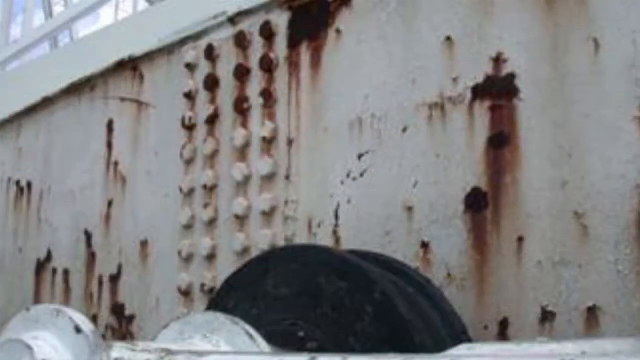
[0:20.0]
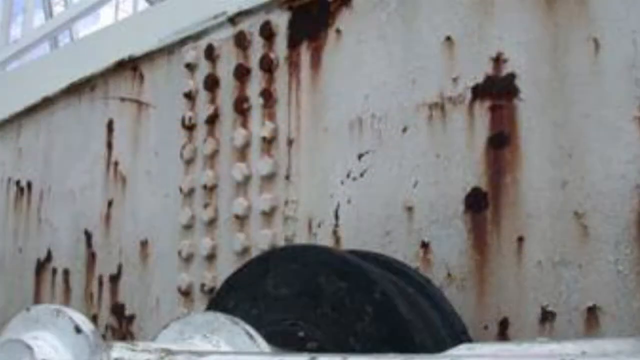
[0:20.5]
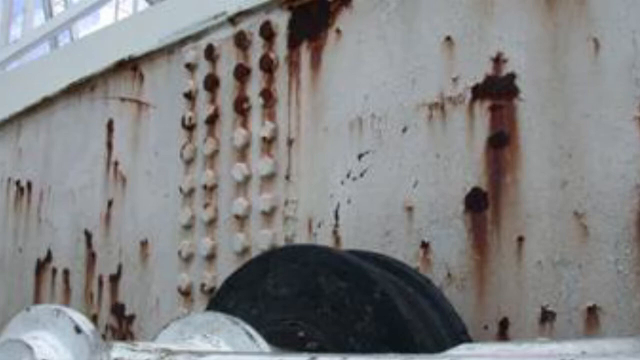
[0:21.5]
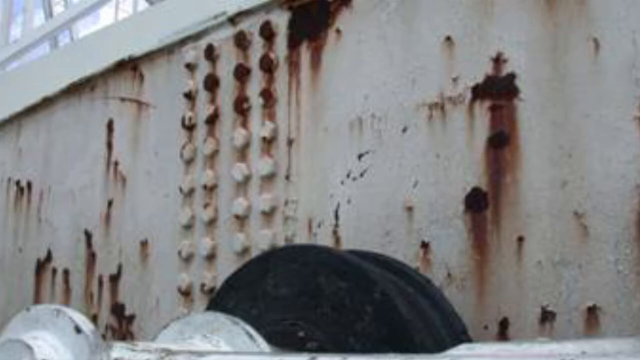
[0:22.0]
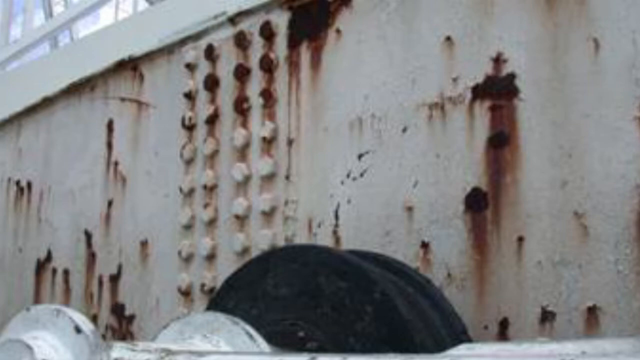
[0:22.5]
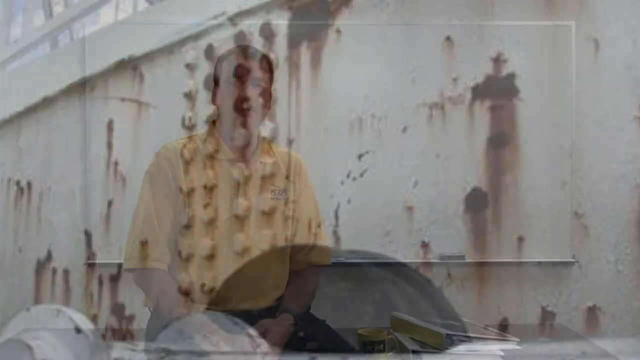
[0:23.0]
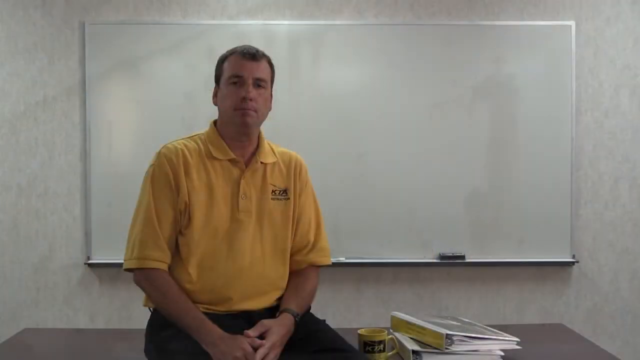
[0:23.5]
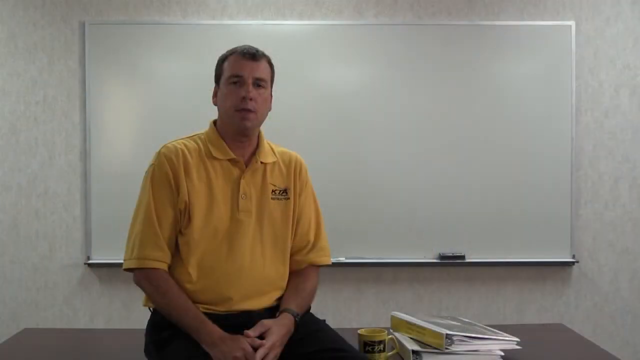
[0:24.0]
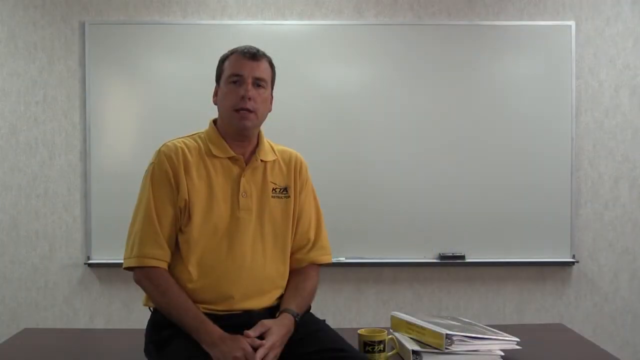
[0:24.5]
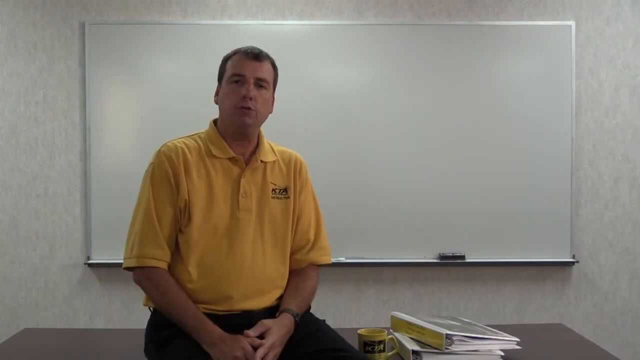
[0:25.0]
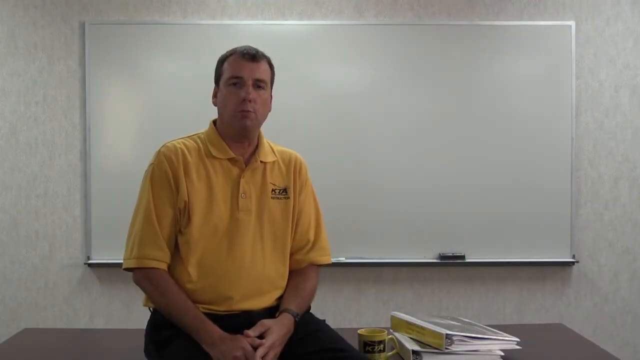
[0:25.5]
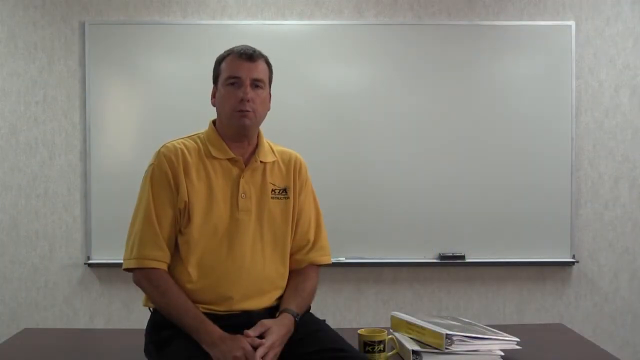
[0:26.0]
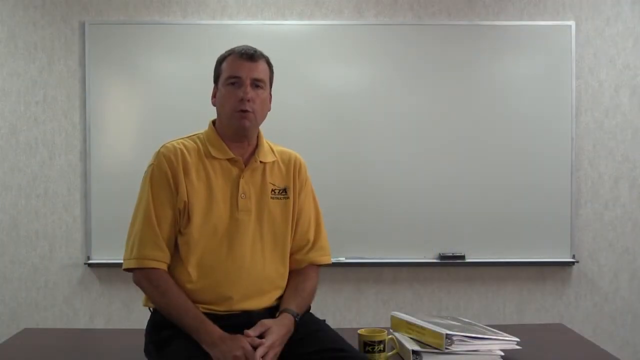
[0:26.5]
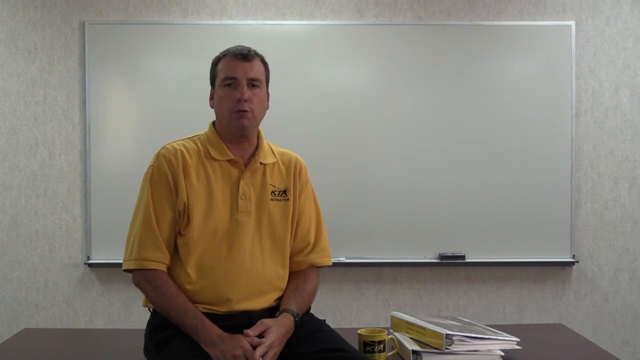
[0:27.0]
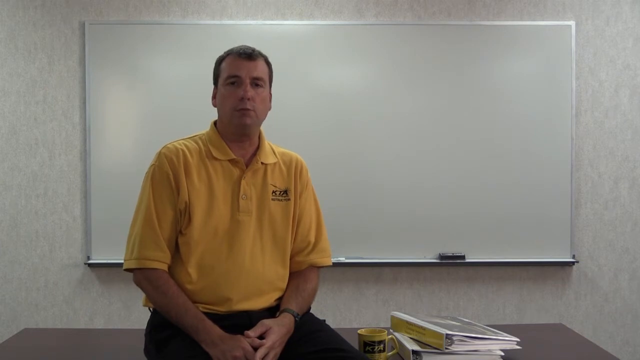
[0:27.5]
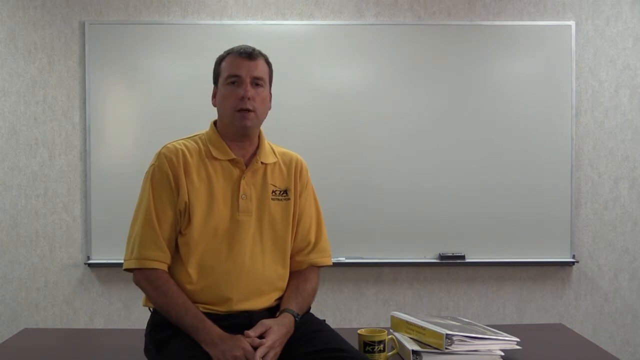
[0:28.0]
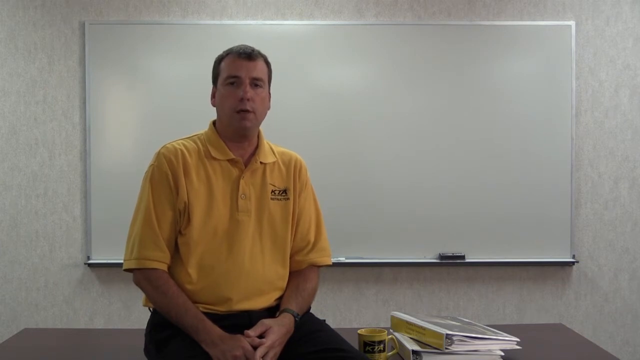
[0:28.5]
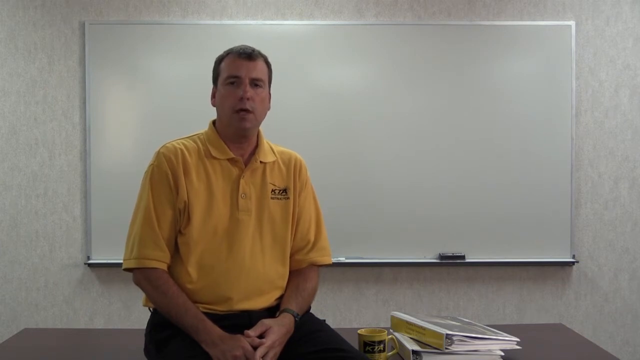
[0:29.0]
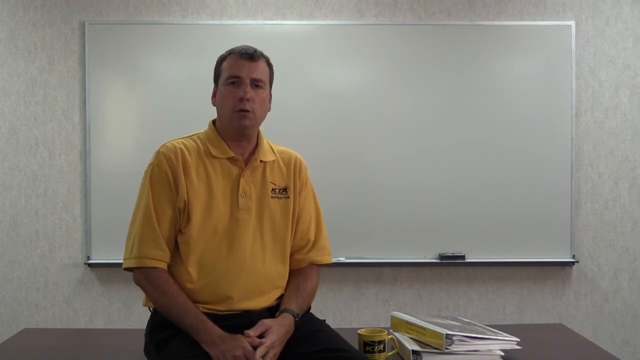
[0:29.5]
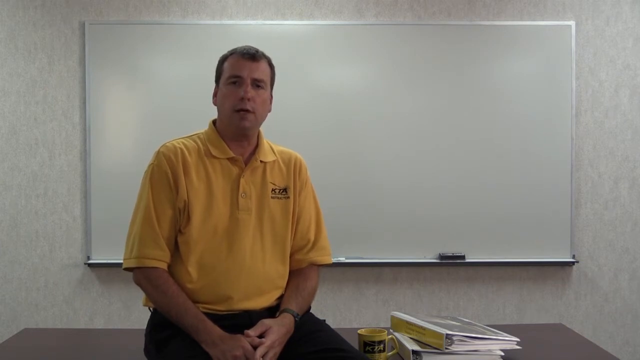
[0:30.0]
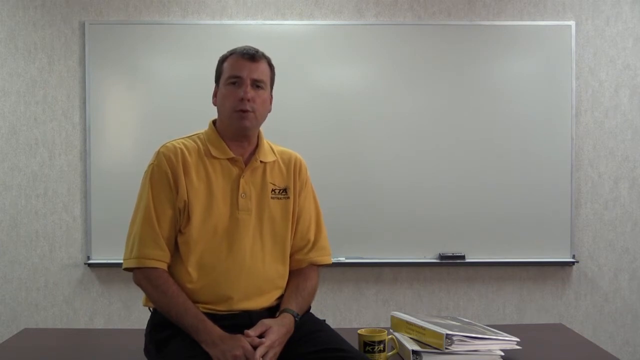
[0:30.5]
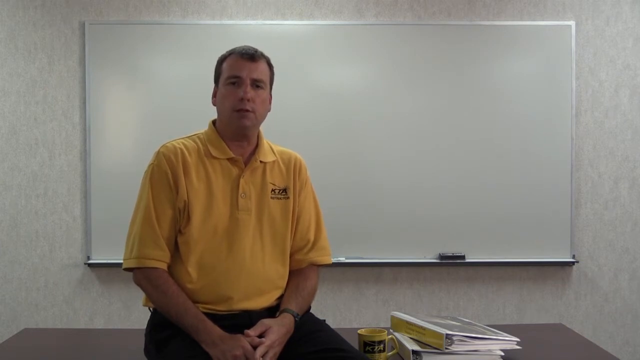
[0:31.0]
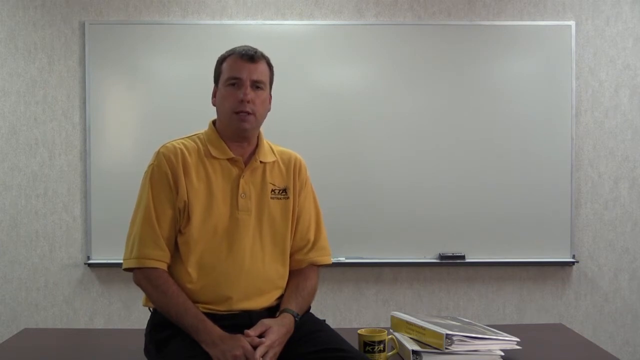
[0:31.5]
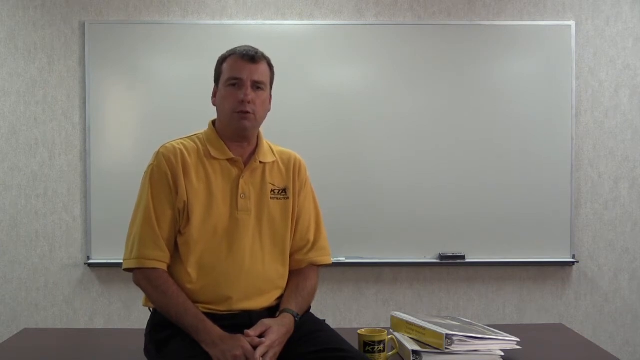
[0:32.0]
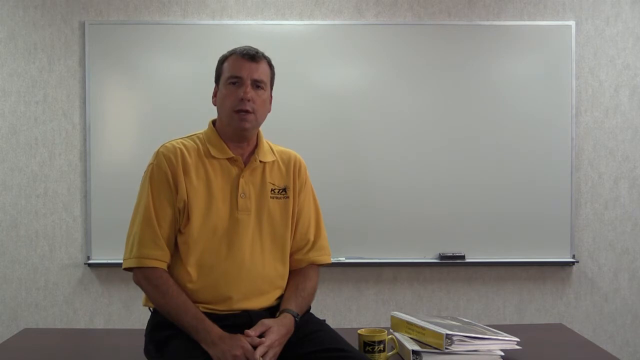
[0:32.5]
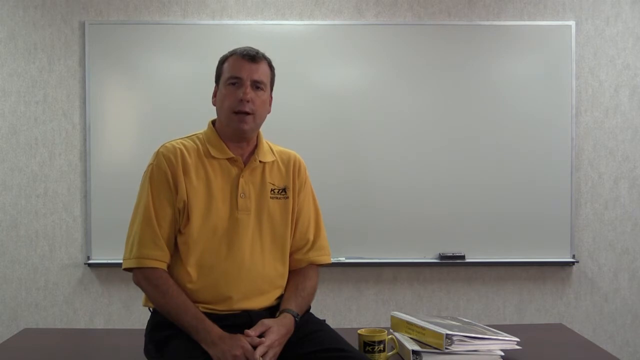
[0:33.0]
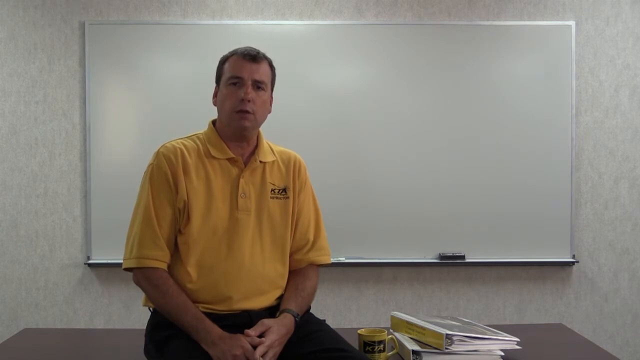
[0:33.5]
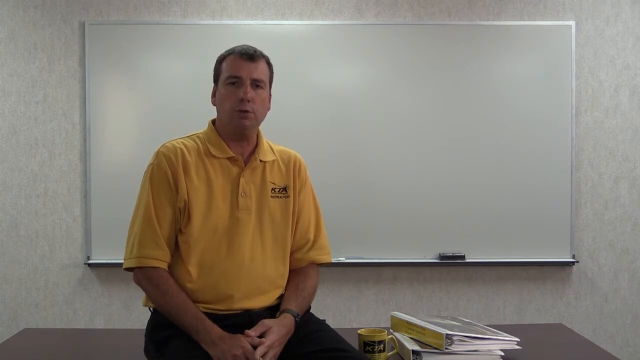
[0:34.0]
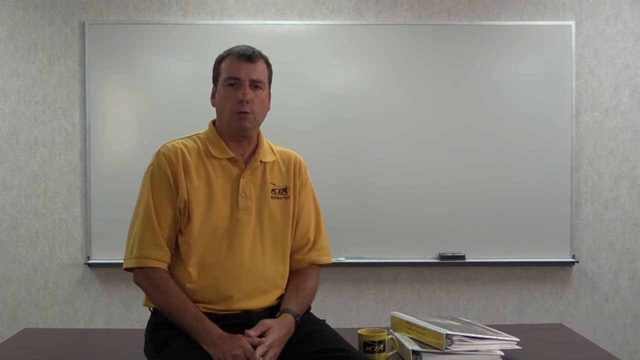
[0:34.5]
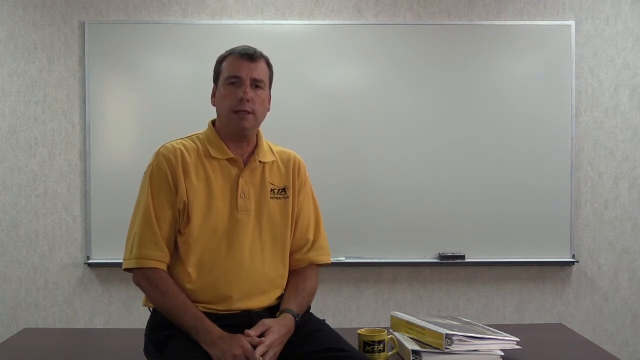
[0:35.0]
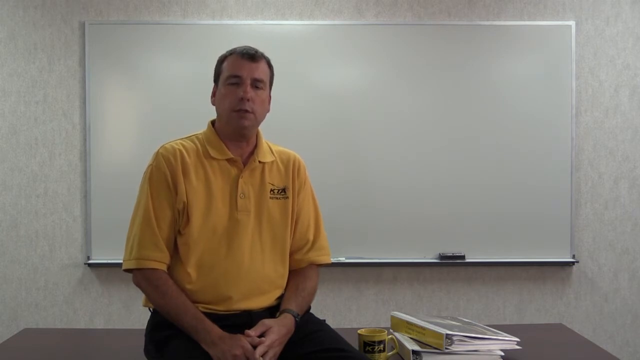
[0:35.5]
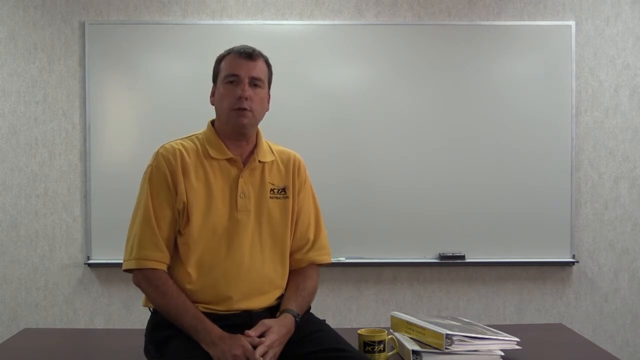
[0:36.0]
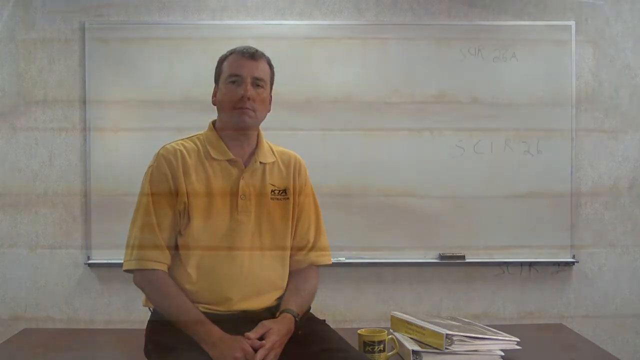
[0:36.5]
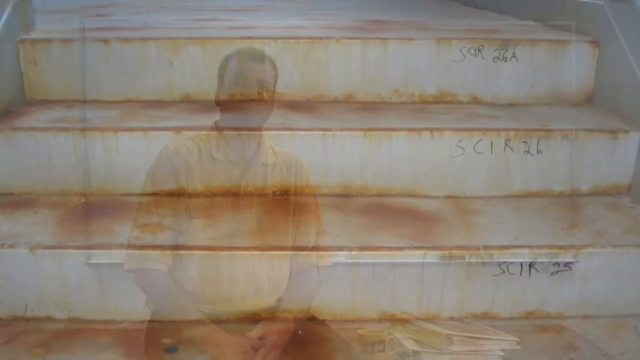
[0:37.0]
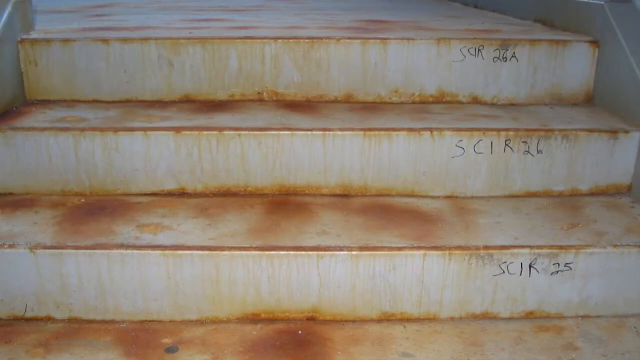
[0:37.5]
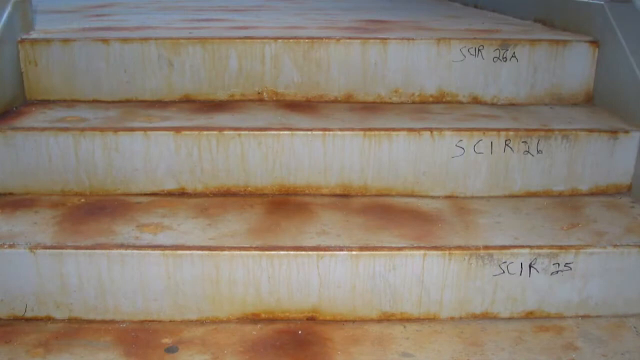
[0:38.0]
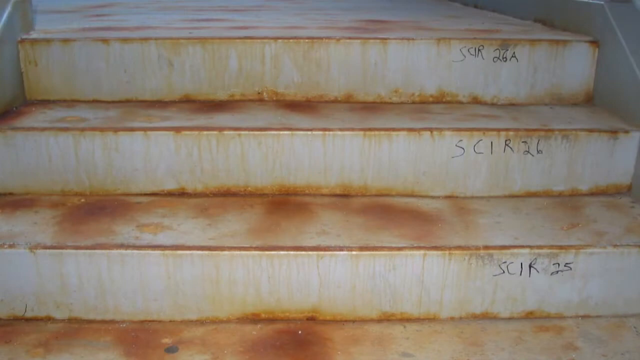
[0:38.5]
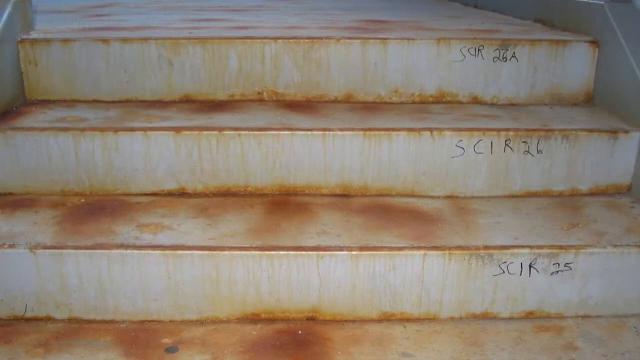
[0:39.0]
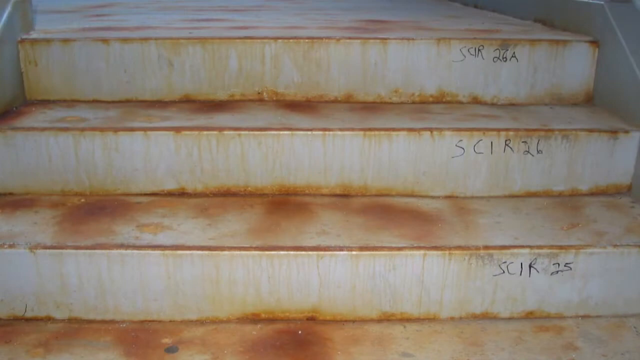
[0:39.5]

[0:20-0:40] The lecturer wears a yellow T-shirt, with a whiteboard behind him and a mug on the table. A metal piece that has rusted and corroded is shown, and there are notes or files on the table. The labels "SCI R26", "SCRI 26A" and "SCRI 25" are shown on the metallic steps, which have turned yellow. The lecturer is calm as he explains step by step, showing rust and corrosion on the metal.